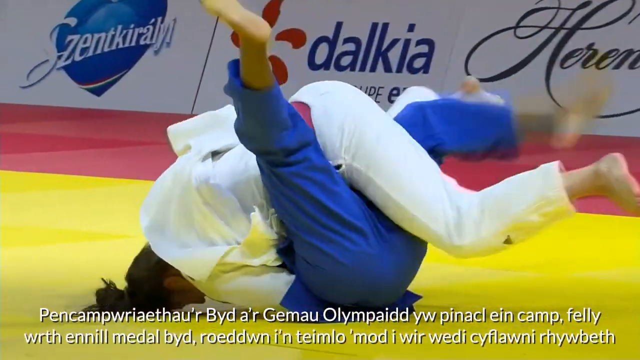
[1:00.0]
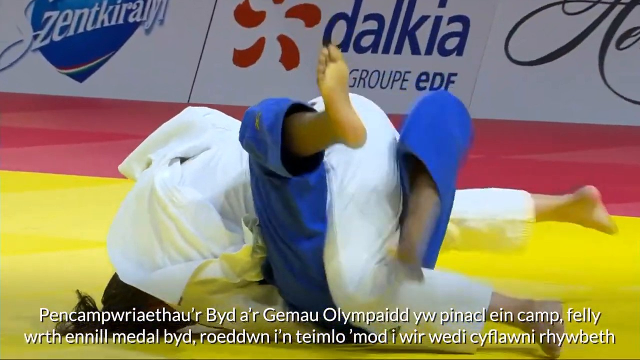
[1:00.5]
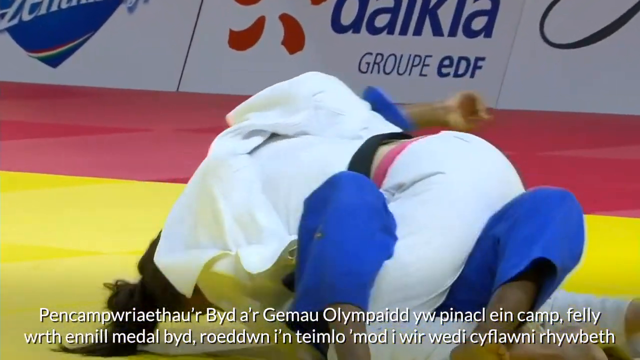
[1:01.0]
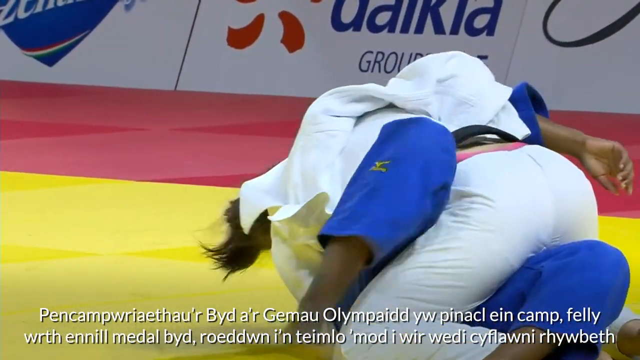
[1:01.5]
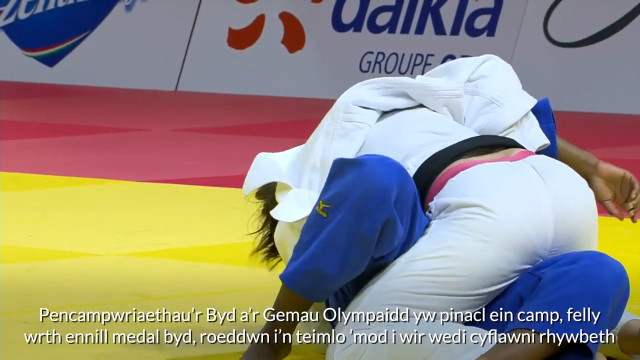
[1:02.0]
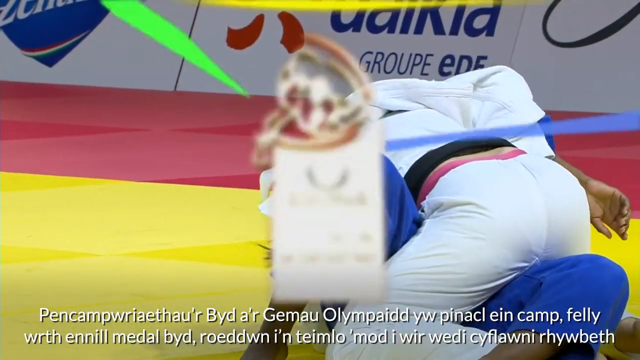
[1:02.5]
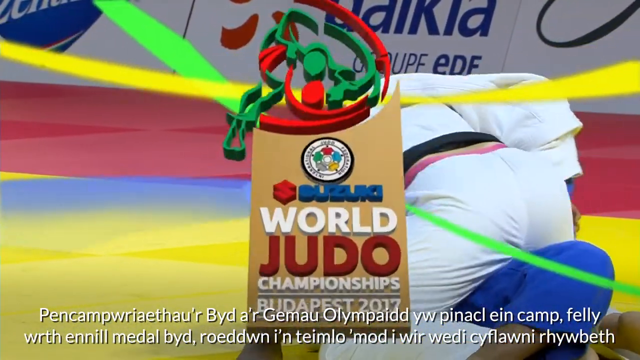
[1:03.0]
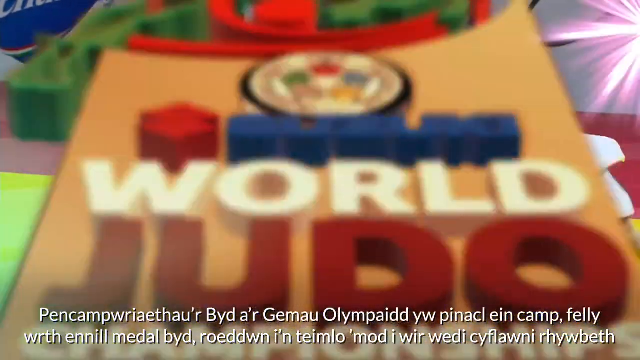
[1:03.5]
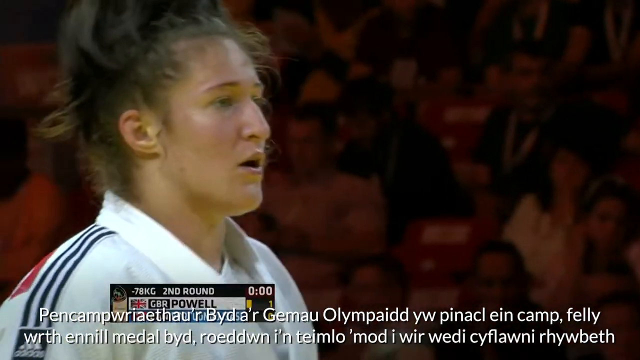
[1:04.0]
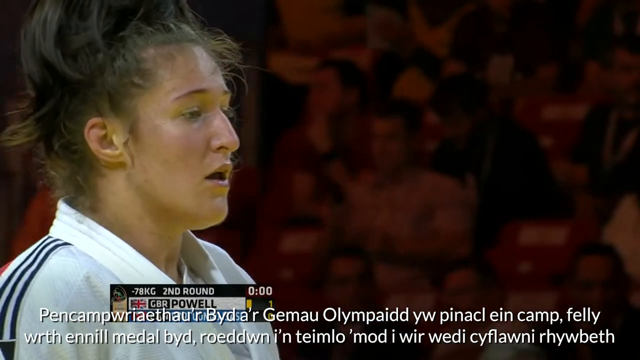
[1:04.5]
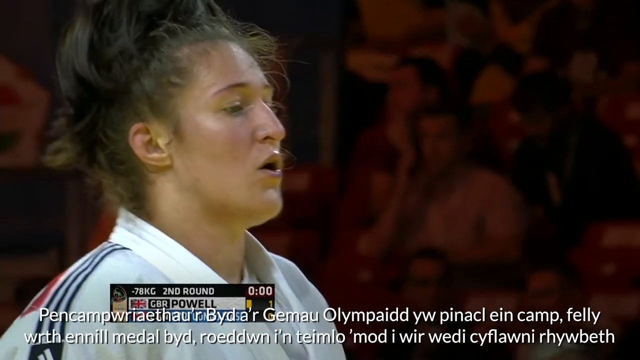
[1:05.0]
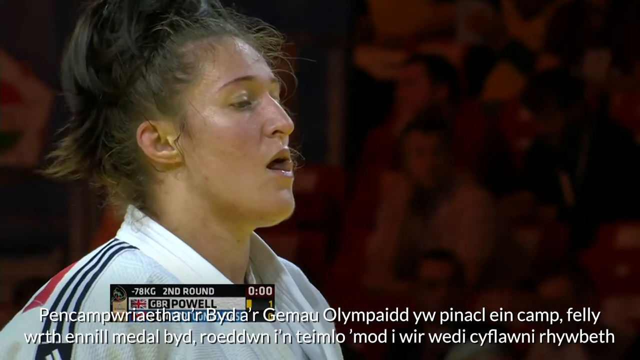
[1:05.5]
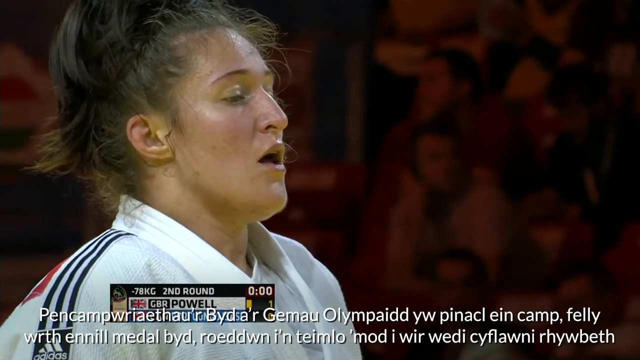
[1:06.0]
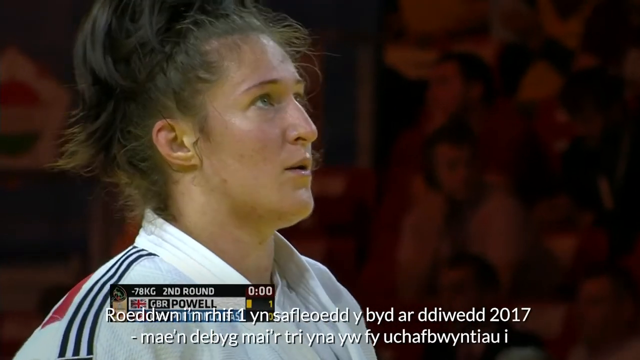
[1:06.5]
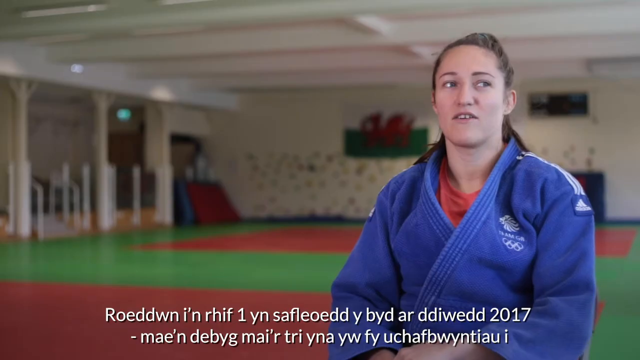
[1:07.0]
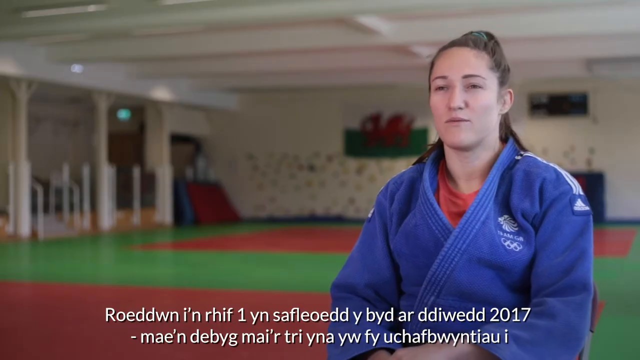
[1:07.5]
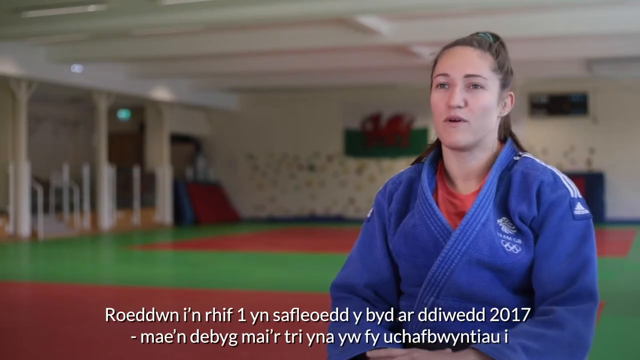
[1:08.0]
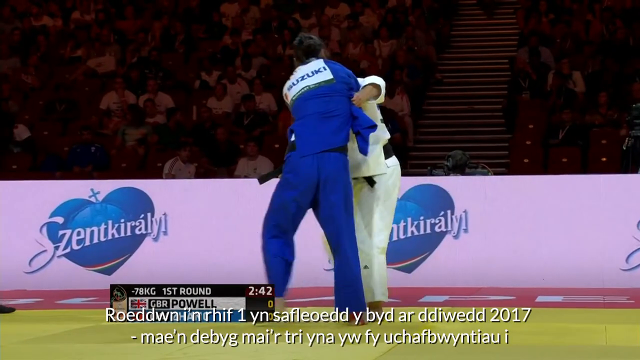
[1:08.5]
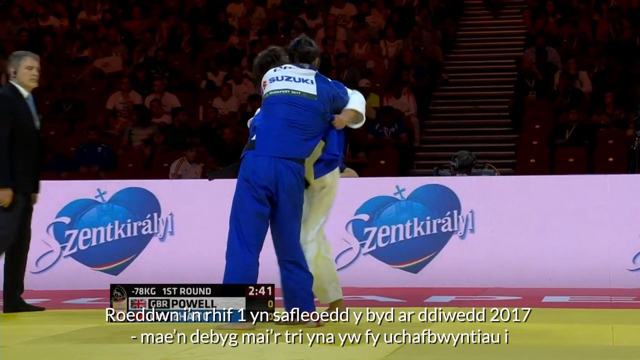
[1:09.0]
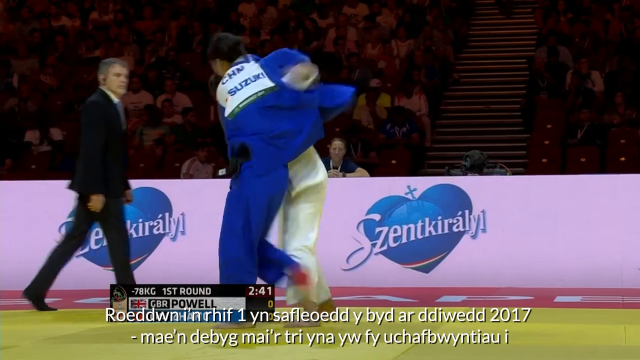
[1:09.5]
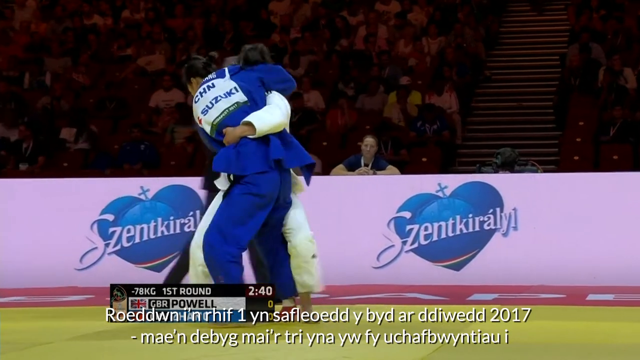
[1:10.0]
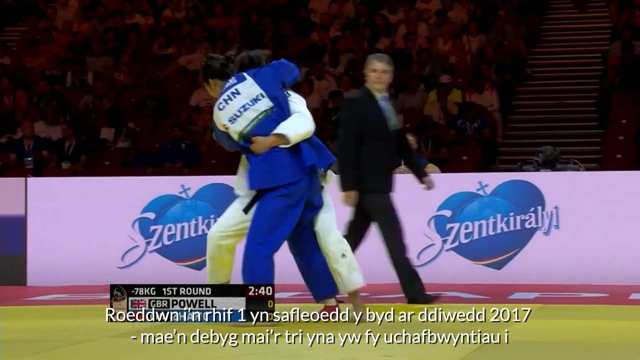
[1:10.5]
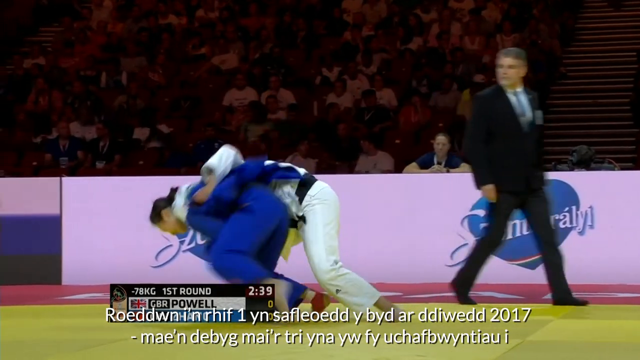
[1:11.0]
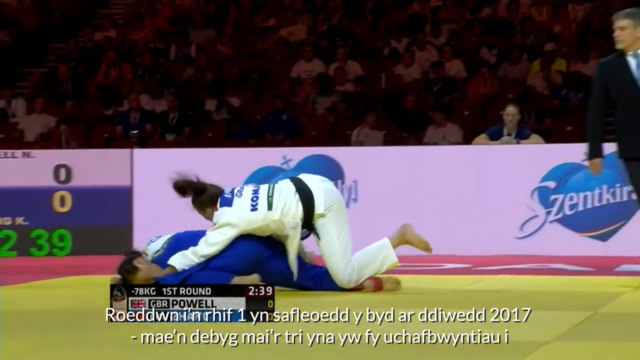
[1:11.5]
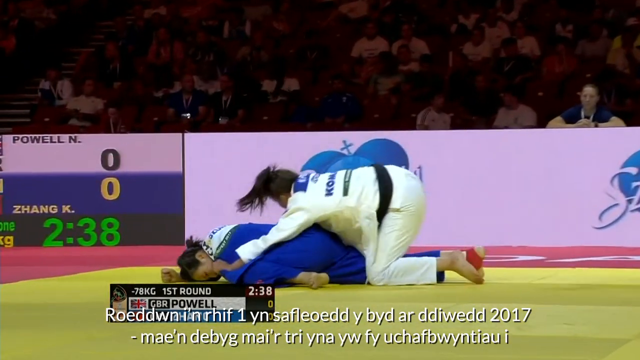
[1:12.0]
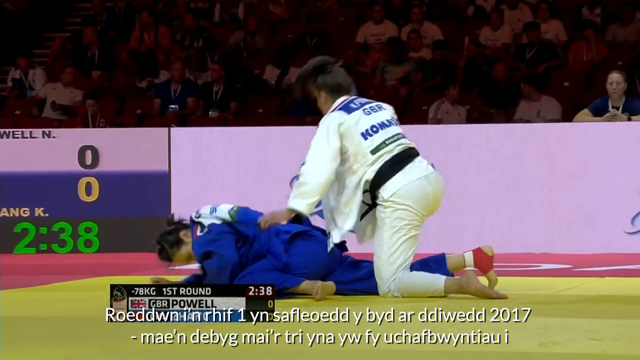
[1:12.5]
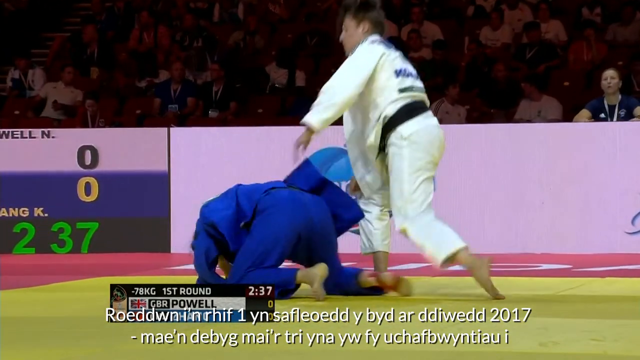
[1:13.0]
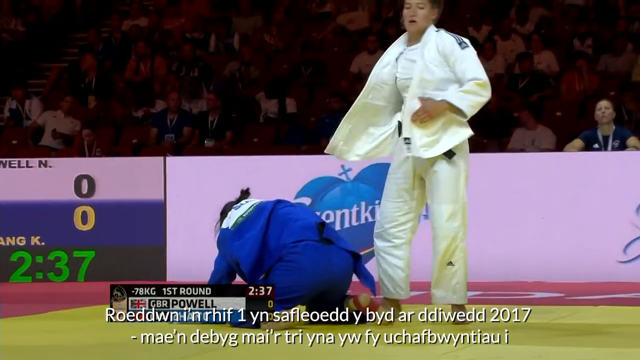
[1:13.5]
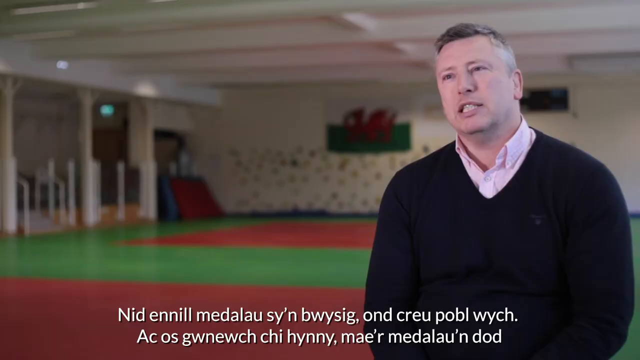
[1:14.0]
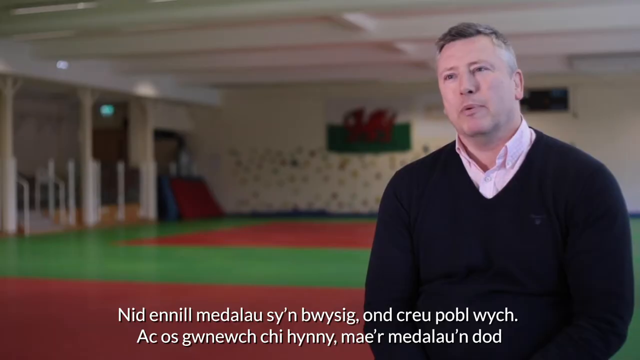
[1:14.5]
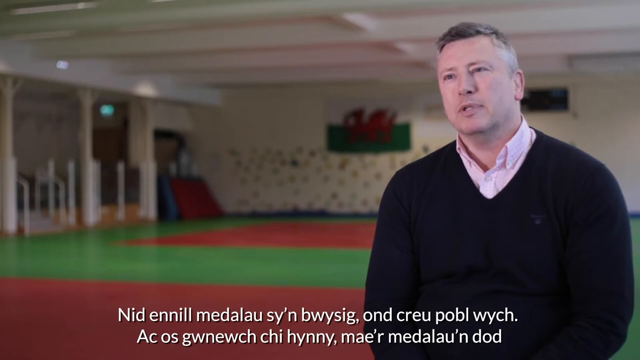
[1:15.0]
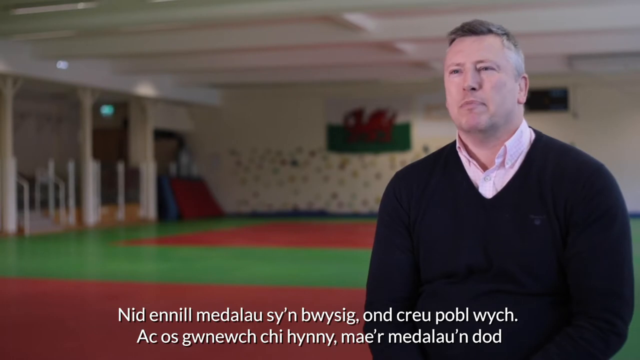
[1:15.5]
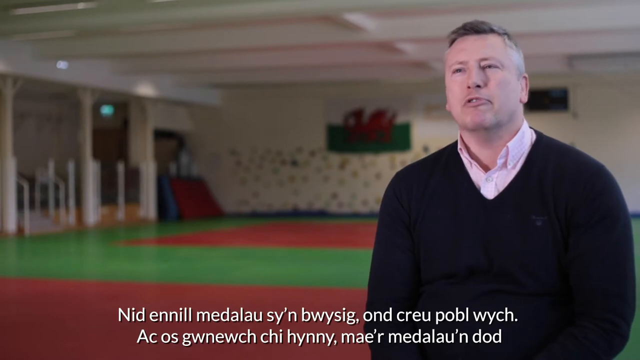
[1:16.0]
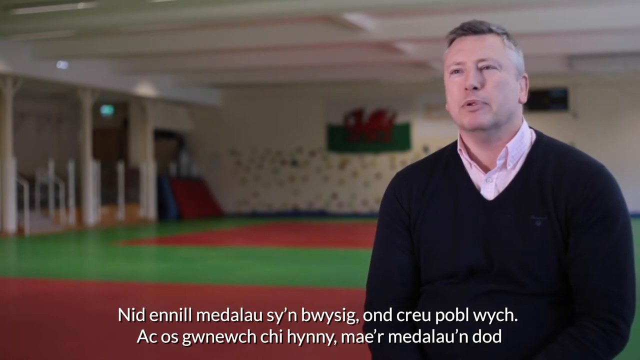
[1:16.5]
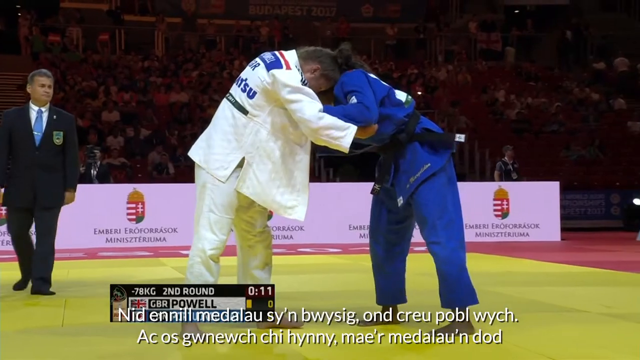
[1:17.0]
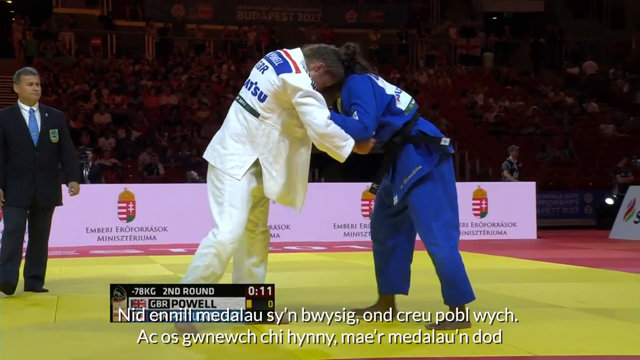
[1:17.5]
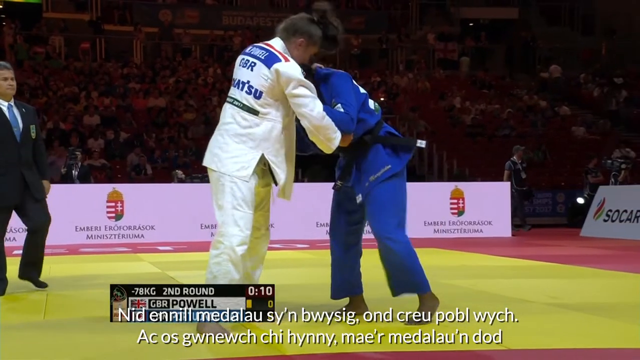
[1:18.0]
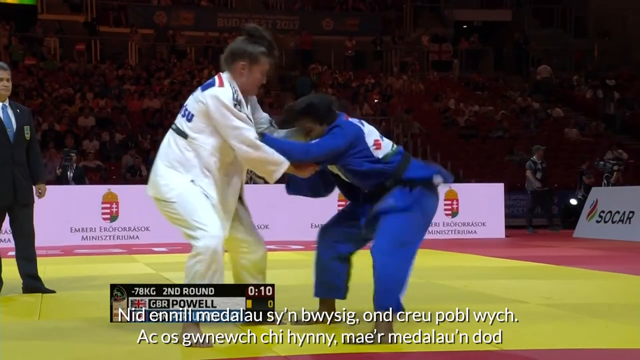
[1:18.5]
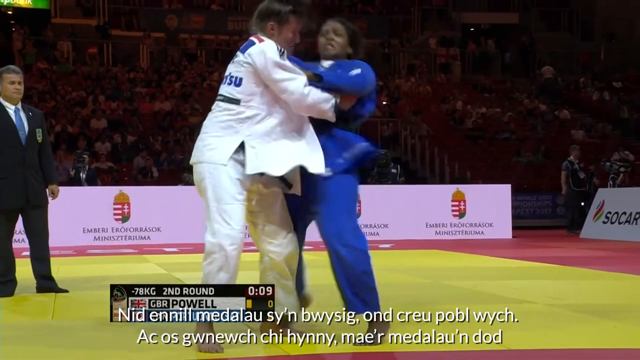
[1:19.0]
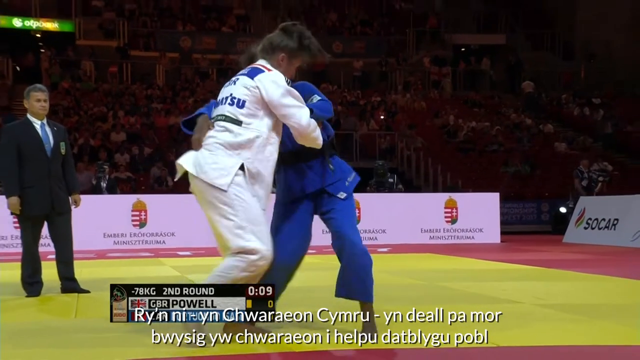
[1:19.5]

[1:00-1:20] Judo players compete against each other. One player, a woman, manages to defeat the other players, getting them to the ground before she falls. A number of brands, Eastern European brands, appear in the background. Many women players compete against each other.